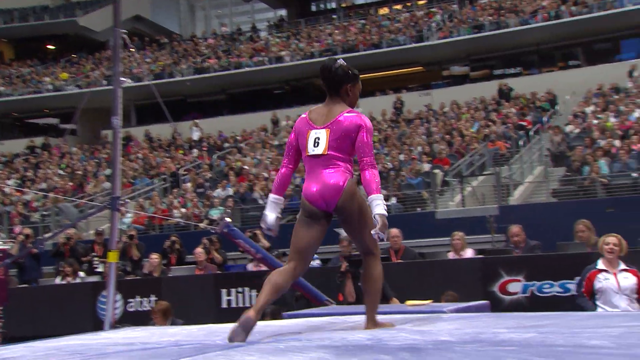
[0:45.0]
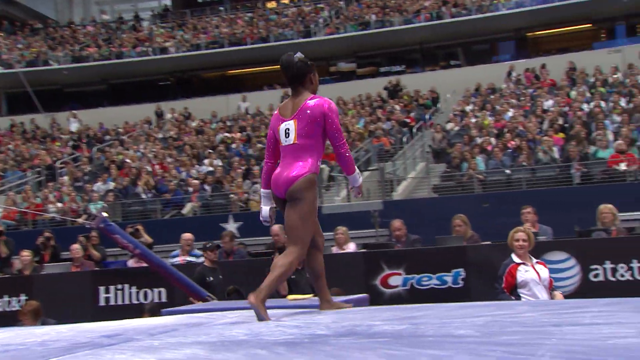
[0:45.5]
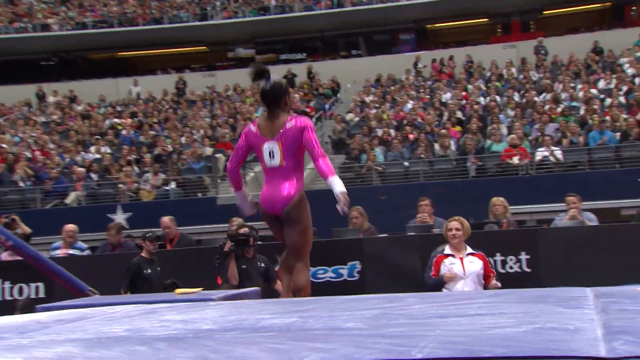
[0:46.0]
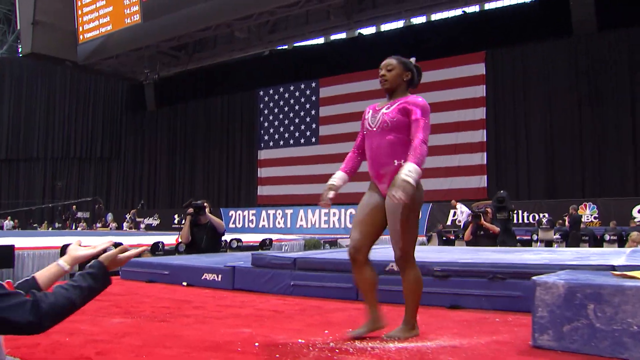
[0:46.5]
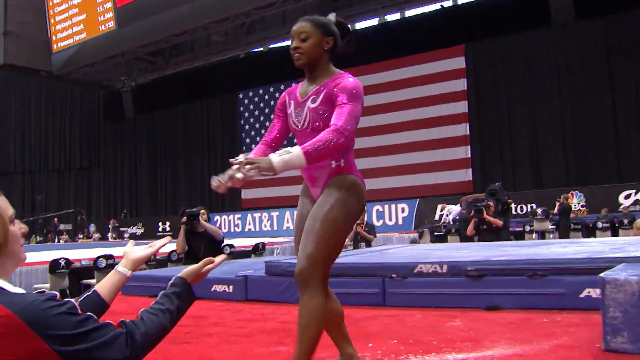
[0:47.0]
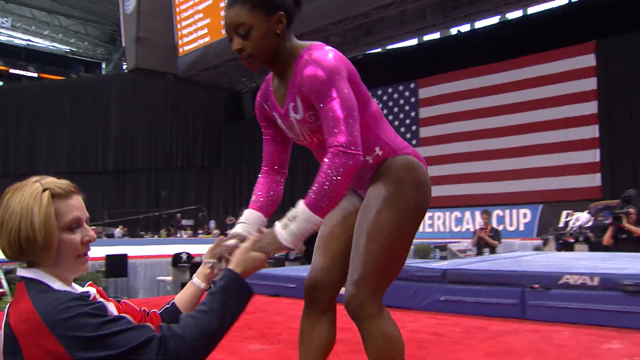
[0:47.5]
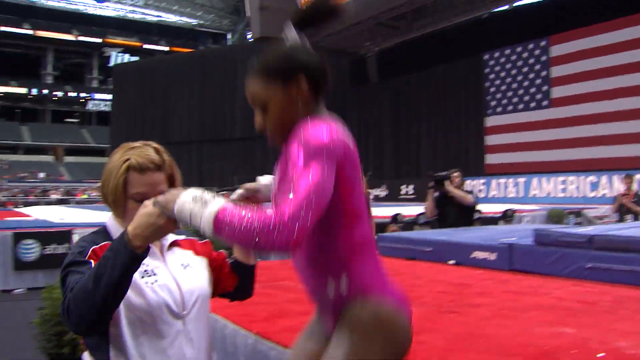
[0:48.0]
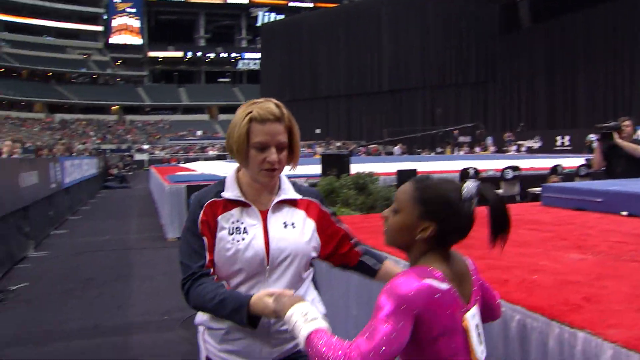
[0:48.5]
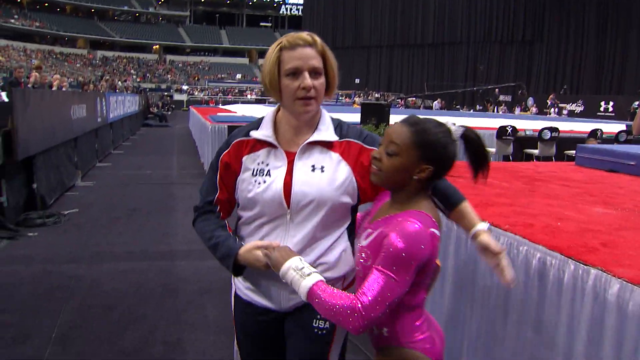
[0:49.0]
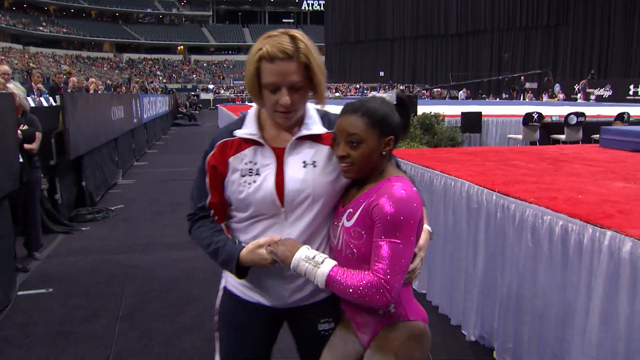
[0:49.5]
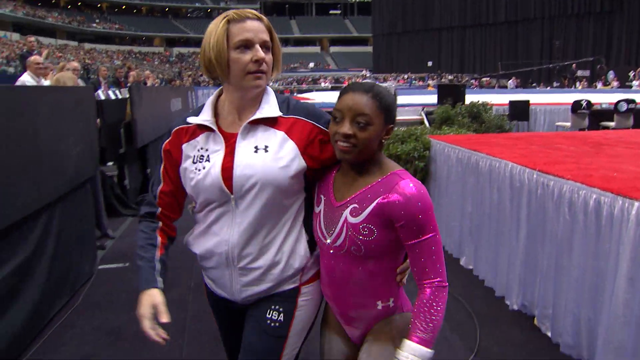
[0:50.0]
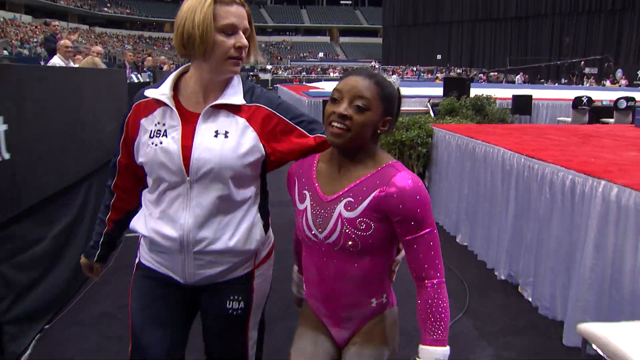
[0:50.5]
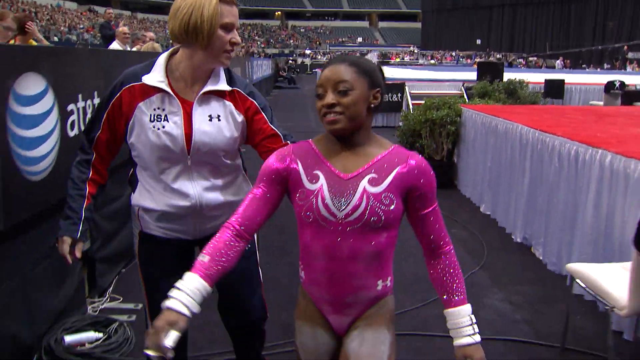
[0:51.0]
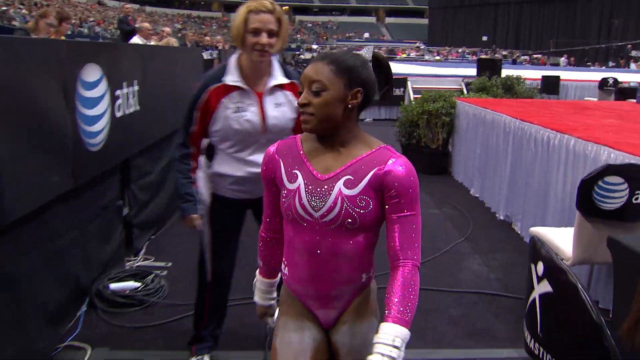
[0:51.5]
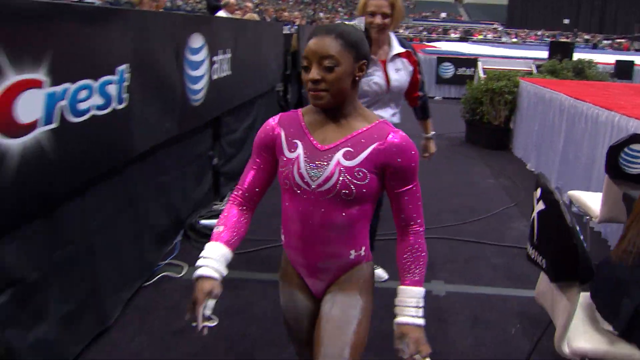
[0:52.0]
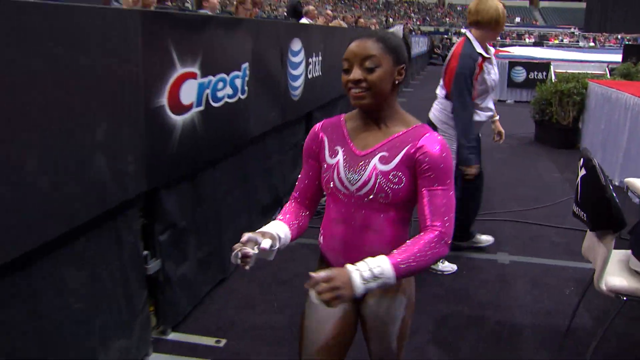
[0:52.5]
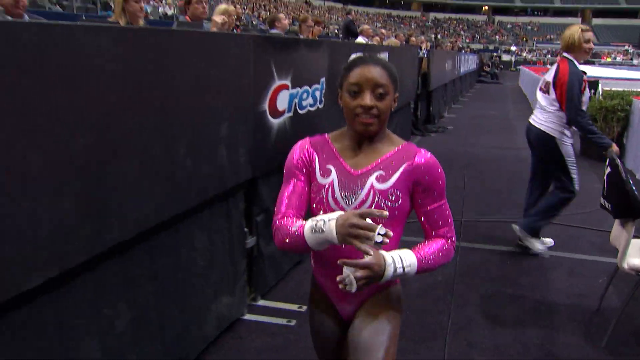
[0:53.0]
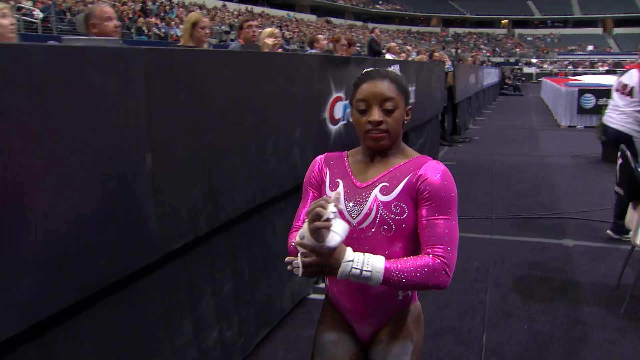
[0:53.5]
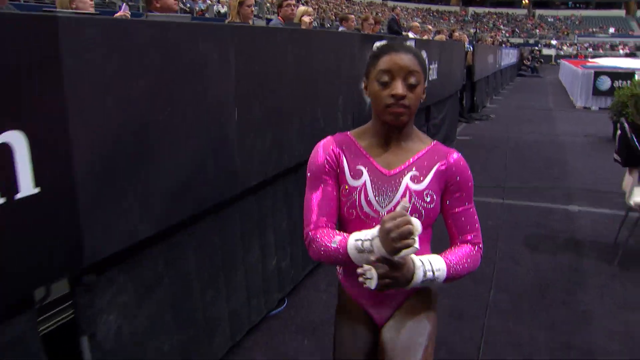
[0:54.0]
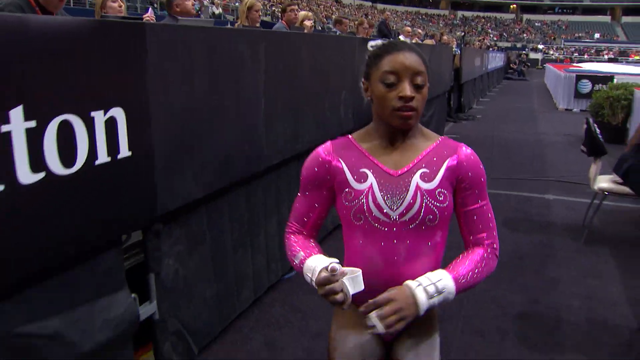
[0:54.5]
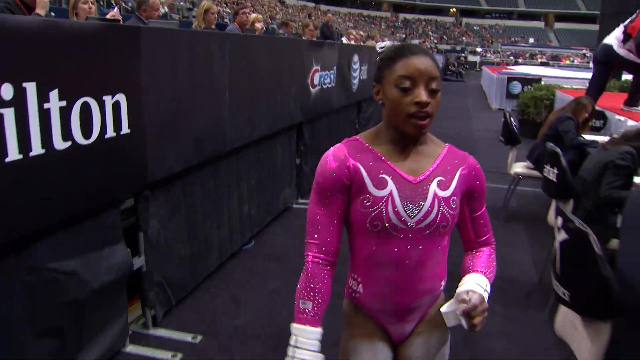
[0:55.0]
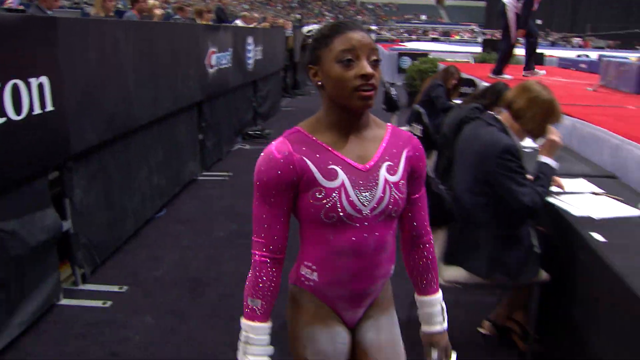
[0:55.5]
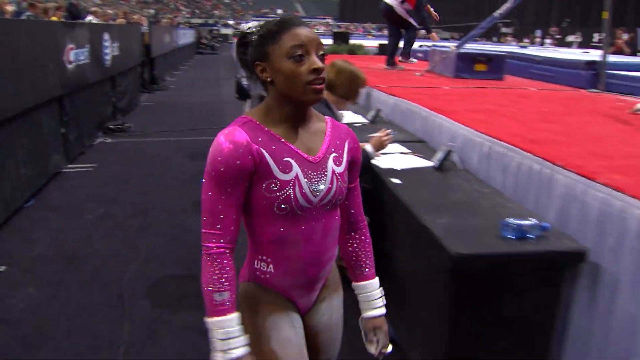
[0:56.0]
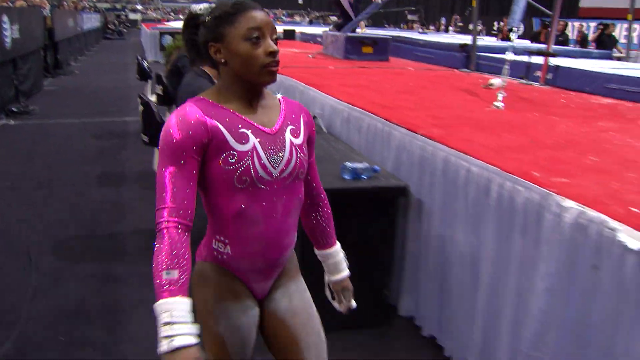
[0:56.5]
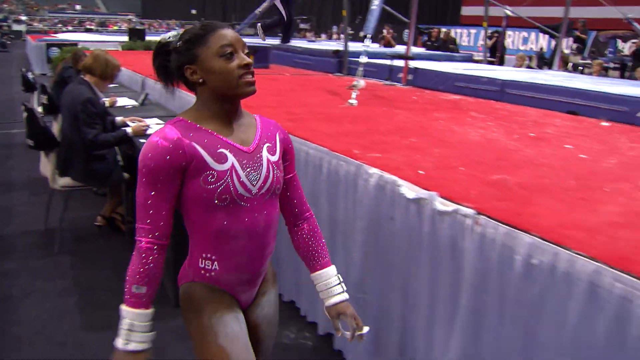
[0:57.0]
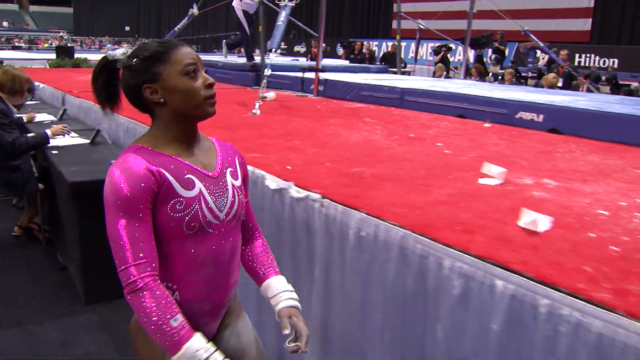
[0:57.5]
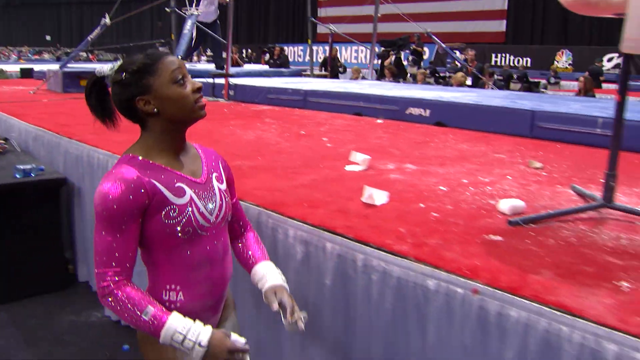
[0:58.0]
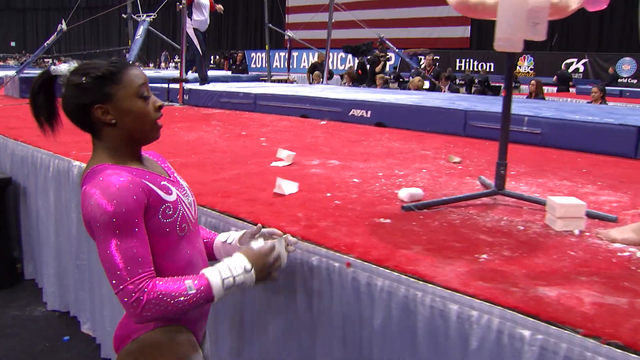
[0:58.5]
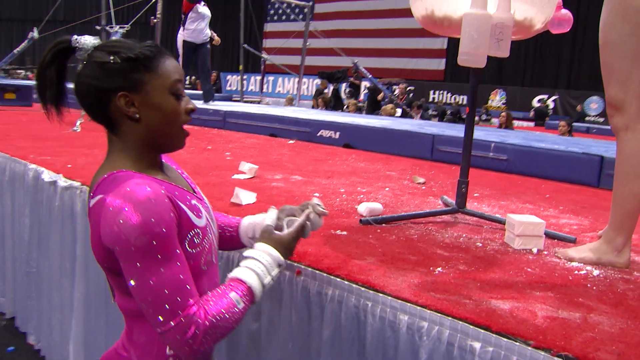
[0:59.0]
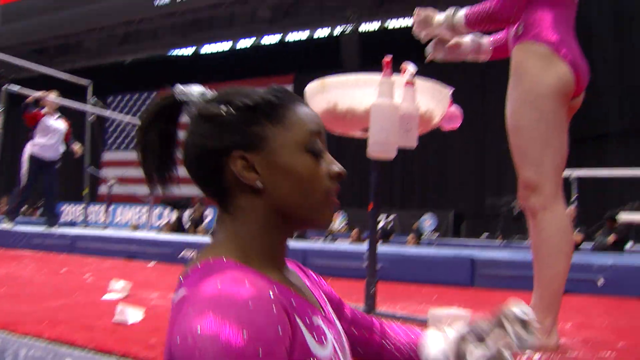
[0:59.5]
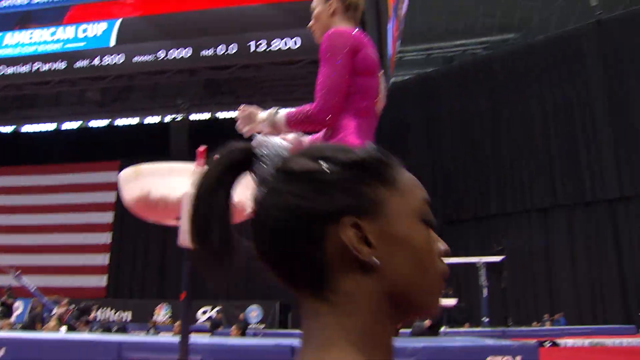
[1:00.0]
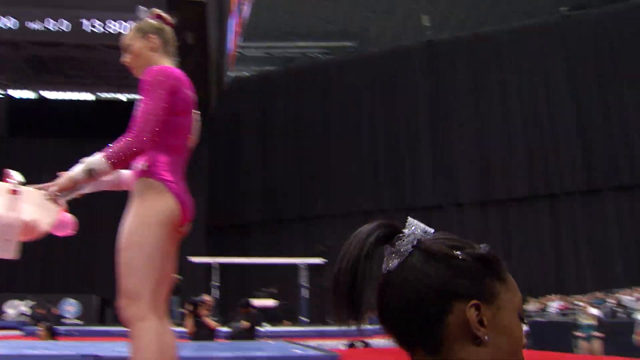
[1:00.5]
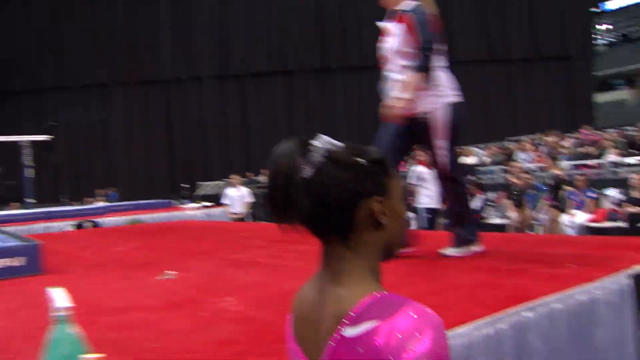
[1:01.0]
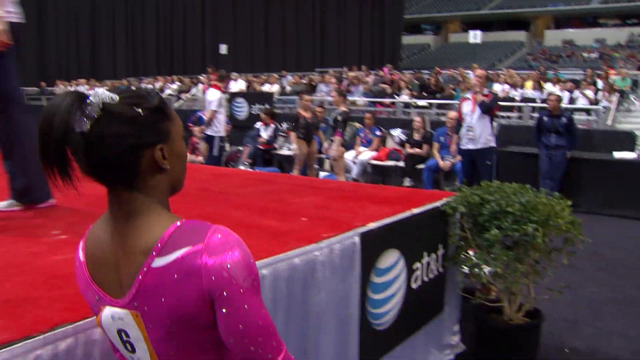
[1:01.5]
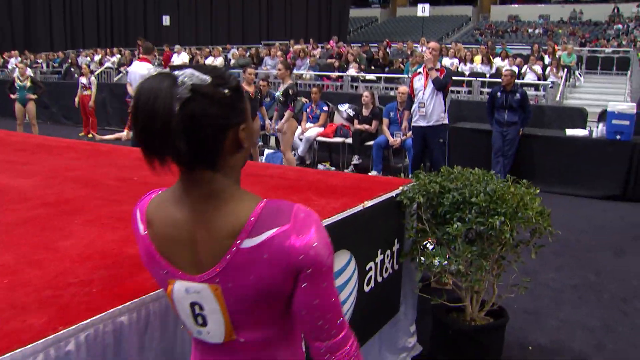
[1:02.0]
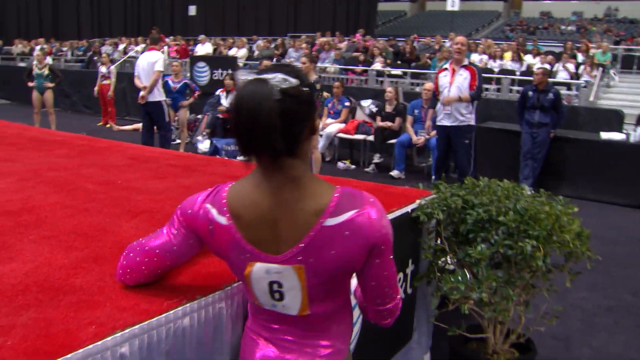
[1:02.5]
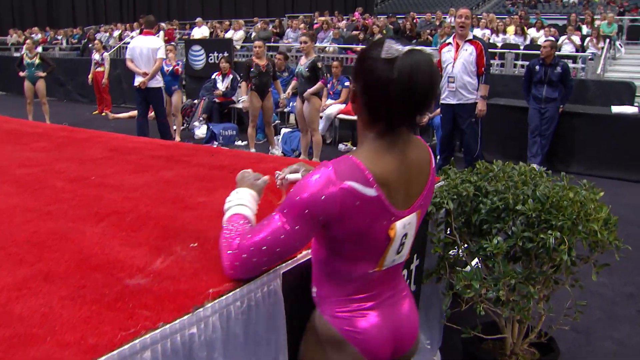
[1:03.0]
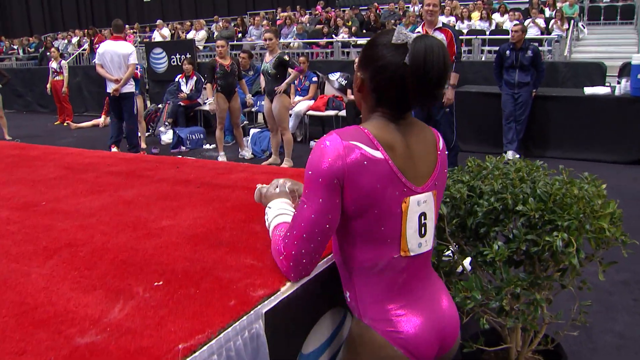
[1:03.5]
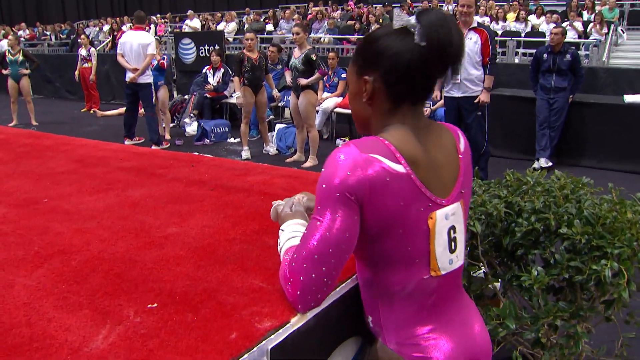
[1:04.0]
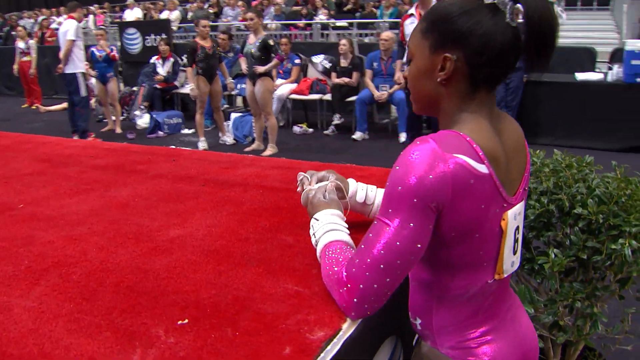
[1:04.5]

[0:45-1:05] The gymnast walks off the stage and is helped down the platform by an older white woman, possibly her coach or a sponsor for the event, who wears a jacket that seems to have a logo on the back that cannot be made out. A big American flag is on the right side of the screen, and there are several sponsorships from companies like Crest and Hilton. On the left side, a camera follows her as she walks down the stage. Another woman wears an outfit identical to hers, and the gymnast talks to her as this woman is apparently getting ready for her own performance. The video then shows the gymnast sort of resting on the platform.